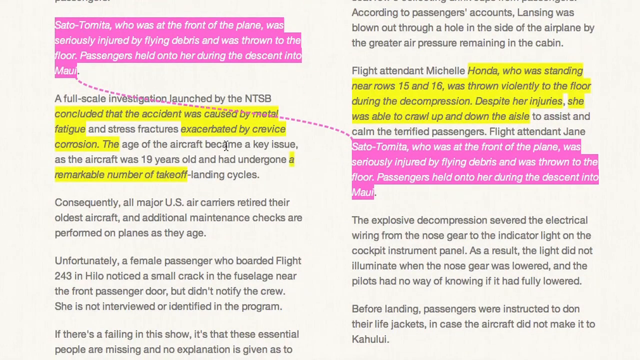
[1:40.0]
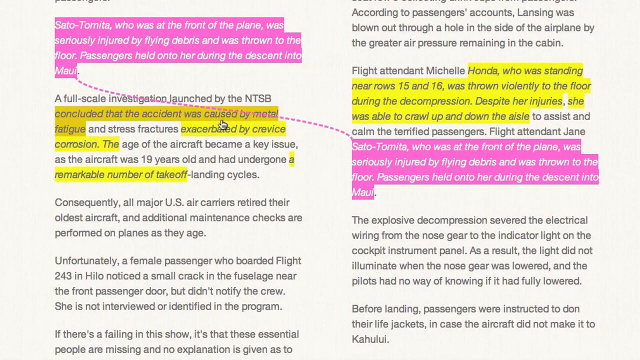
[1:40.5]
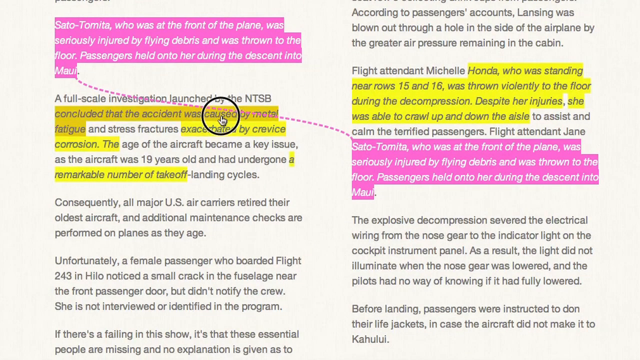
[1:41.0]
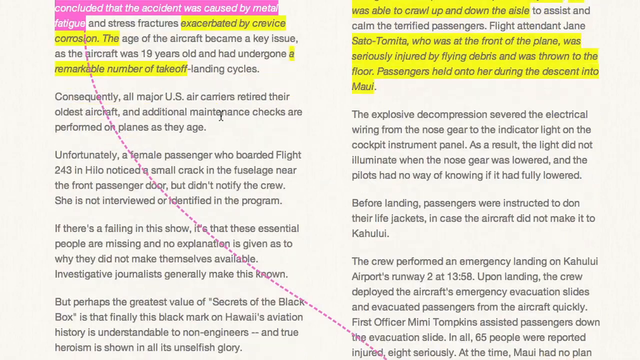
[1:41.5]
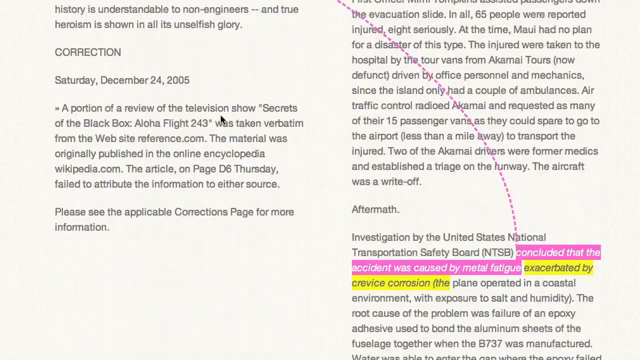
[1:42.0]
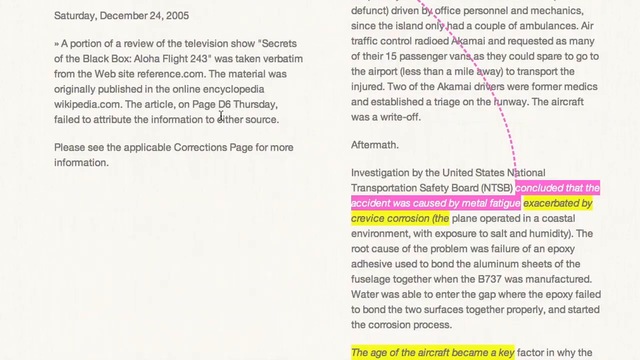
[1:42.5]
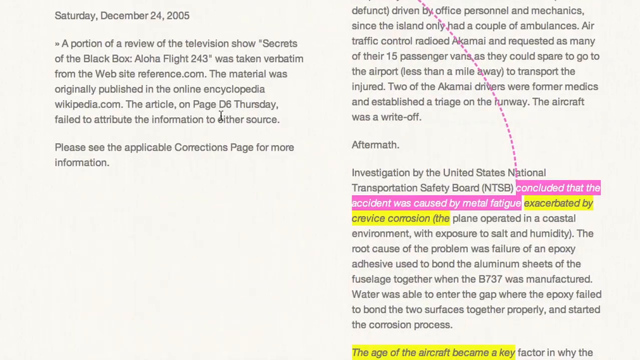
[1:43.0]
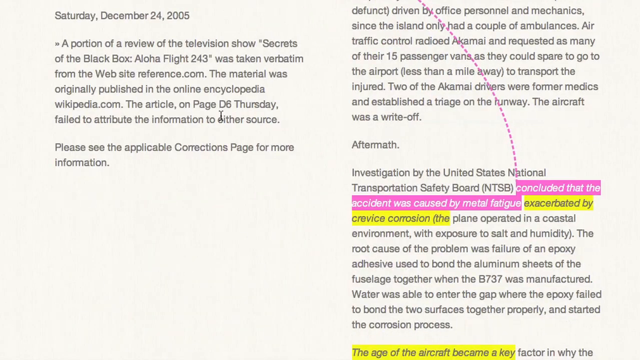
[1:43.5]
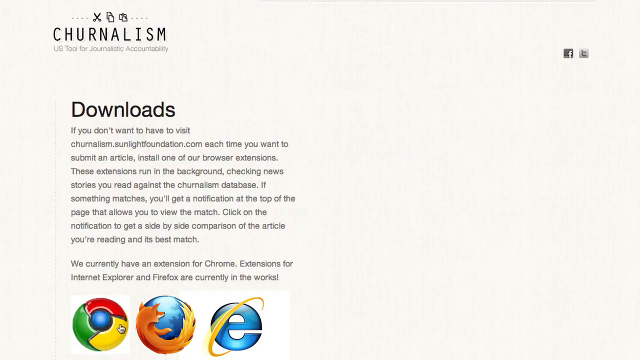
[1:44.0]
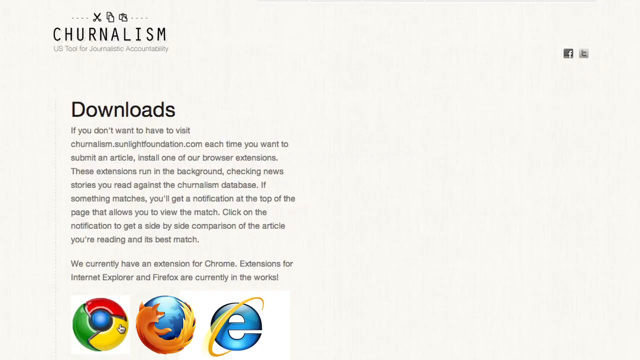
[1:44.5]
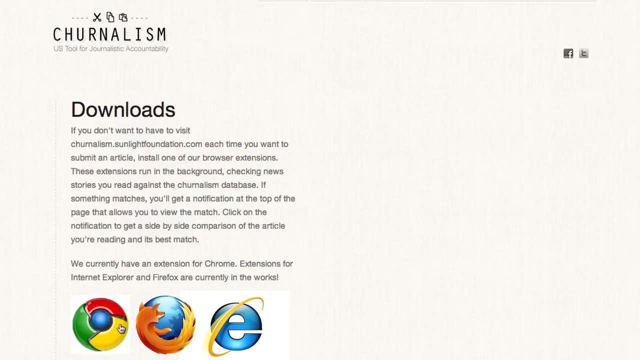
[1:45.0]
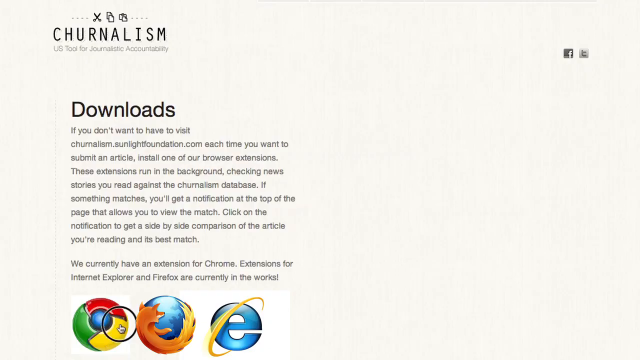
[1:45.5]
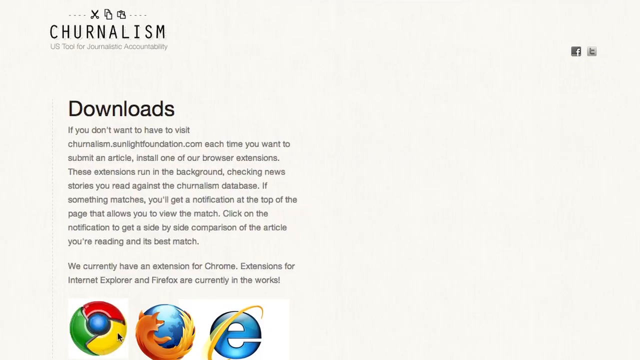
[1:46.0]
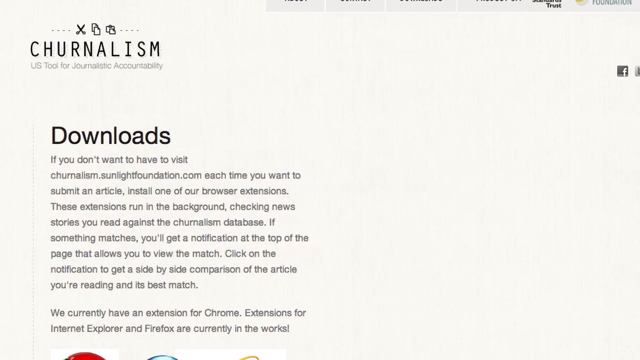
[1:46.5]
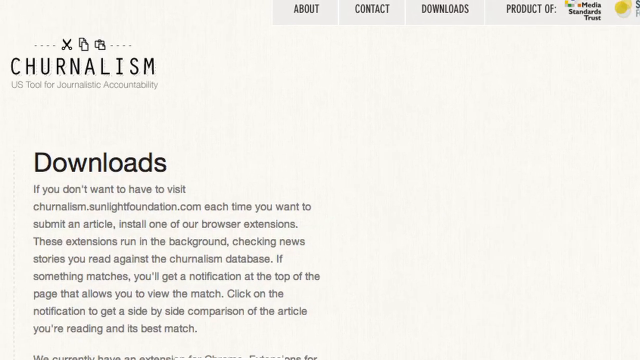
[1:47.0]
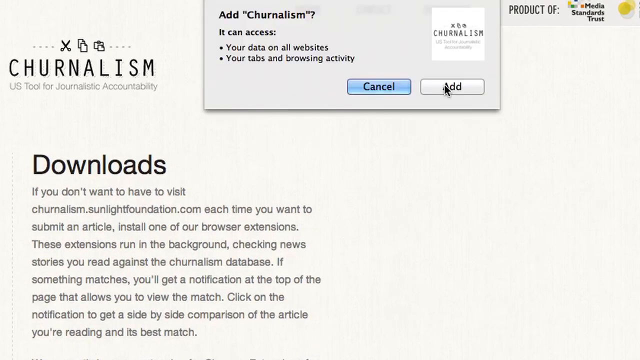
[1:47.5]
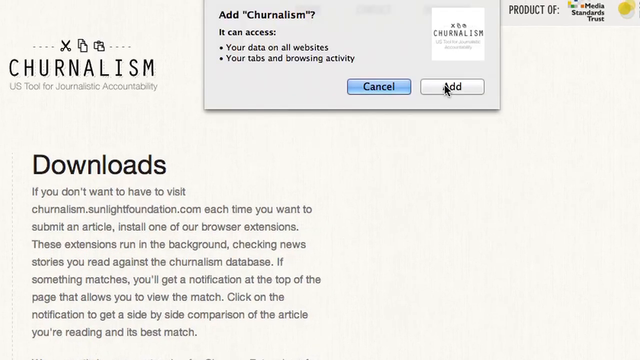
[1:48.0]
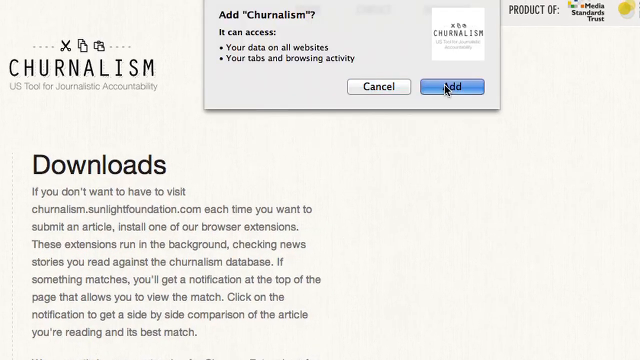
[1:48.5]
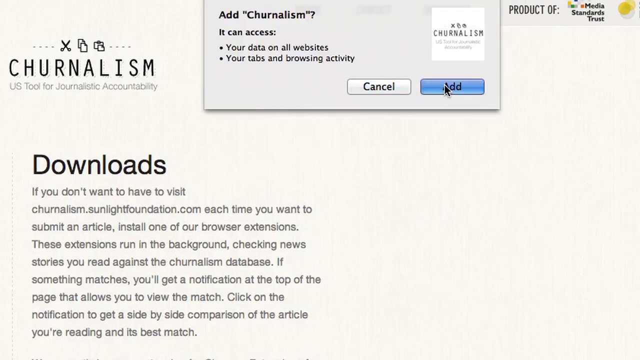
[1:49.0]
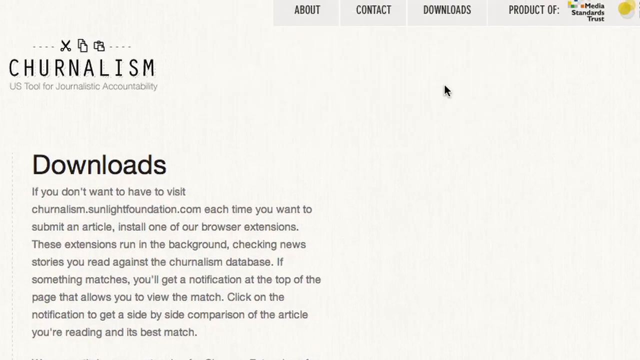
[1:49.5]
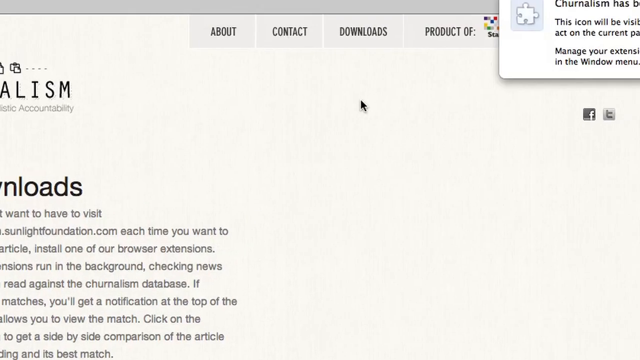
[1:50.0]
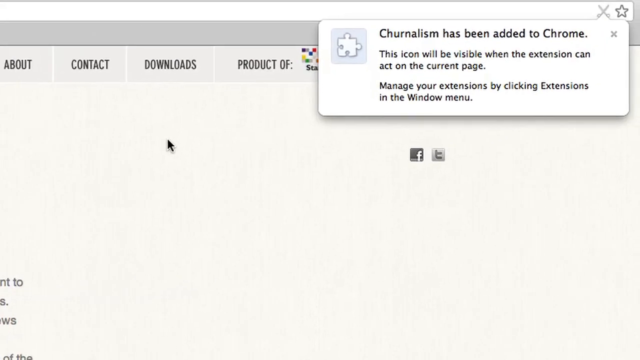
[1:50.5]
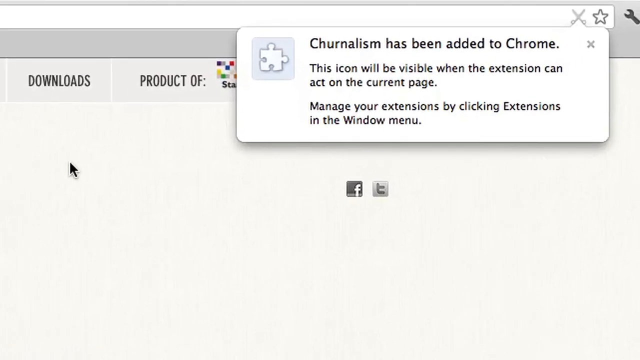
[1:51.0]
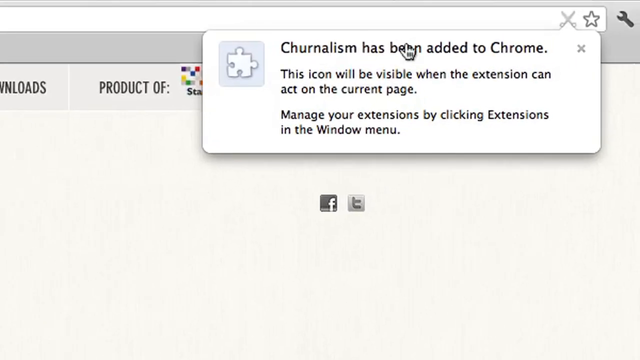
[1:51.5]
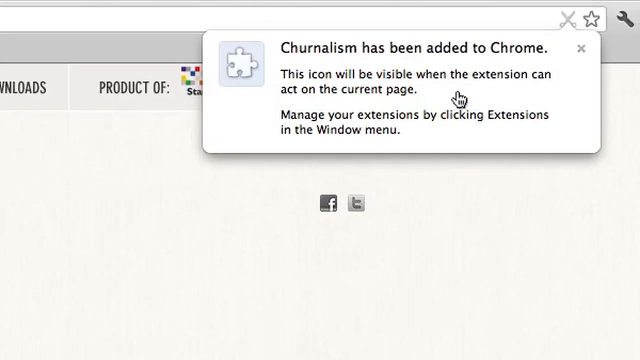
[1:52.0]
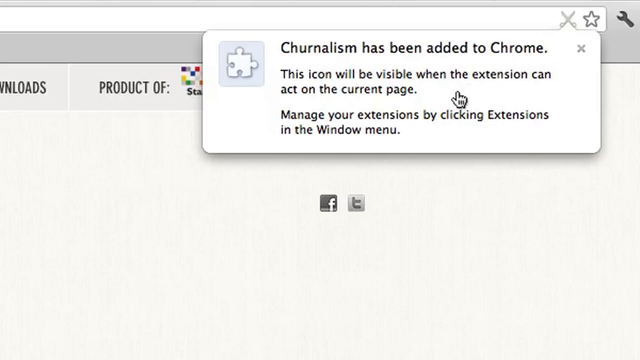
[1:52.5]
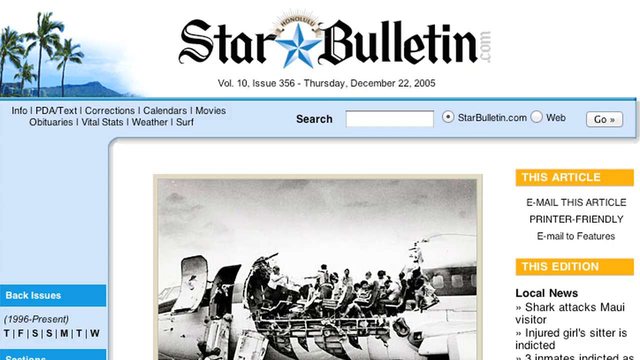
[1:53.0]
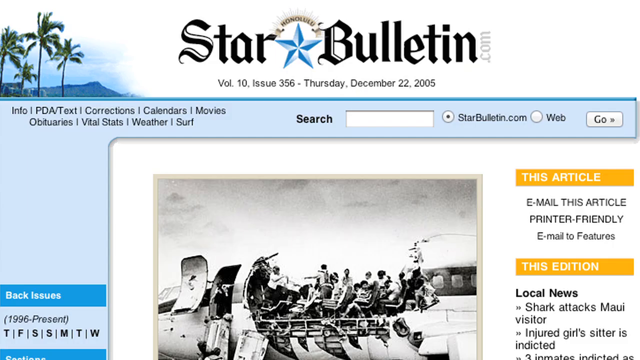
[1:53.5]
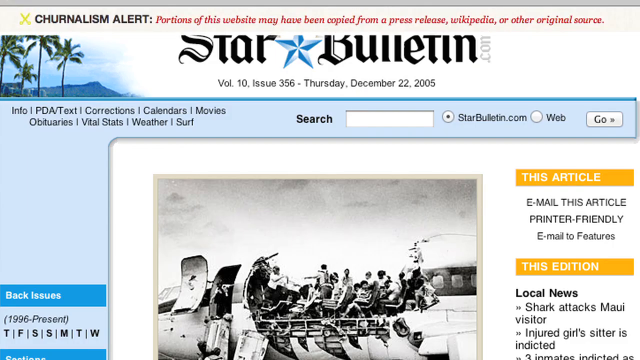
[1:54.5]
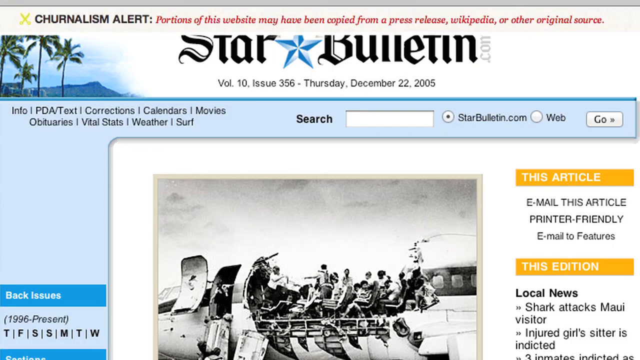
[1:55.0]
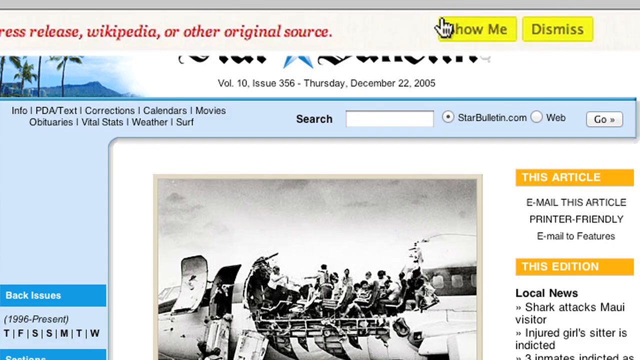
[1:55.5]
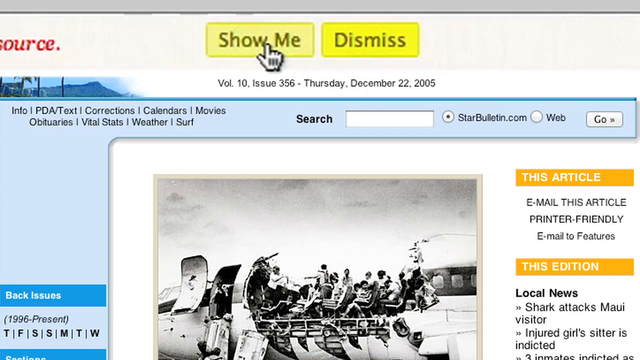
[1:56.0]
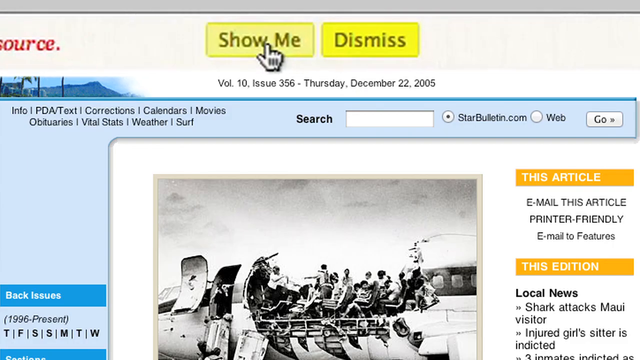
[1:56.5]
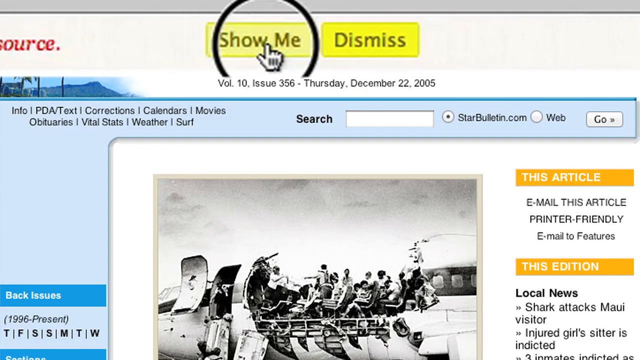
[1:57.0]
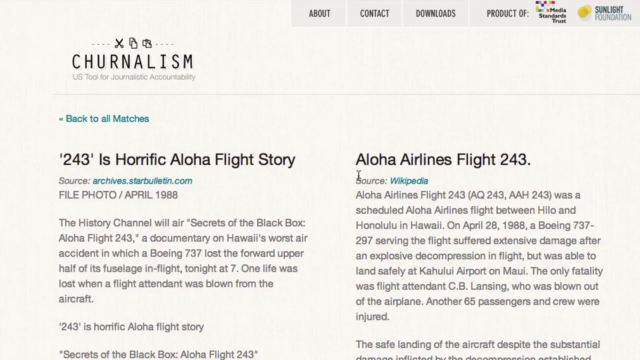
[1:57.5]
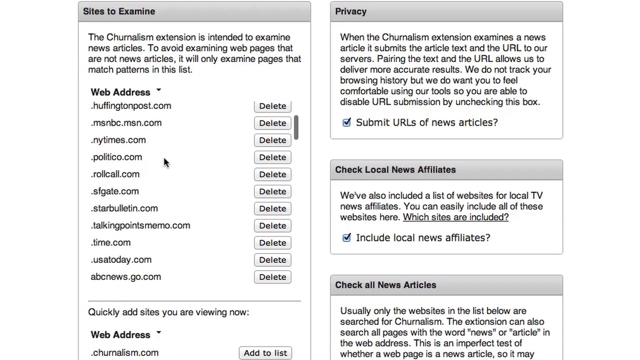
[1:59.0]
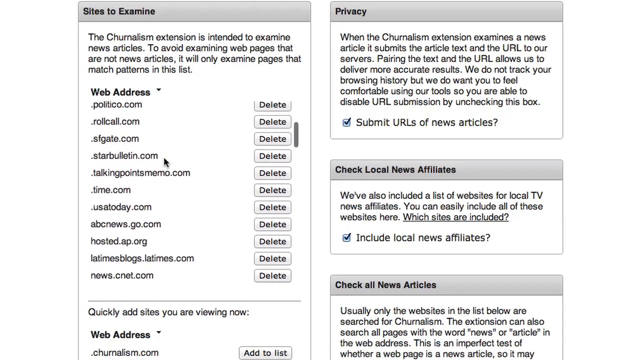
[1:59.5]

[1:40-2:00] Paragraphs of a document are shown highlighted, with the information separated into two columns and yellow and pink highlighting in various areas. The user clicks on one area and connects it to another part of the document while scrolling downward a bit, like hyperlinking the information. The view pans back to the Journalism webpage, which says "Downloads" and underneath, "If you don't want to have to visit churnalism.sunlightfoundation.com each time you want to submit an article, install one of our browser extensions. These extensions run in the background checking news stories you read against the Journalism database." The page scrolls up a bit and the camera focuses on adding Journalism as an extension to Chrome. It then pans over to the homepage of another website showing related information, where a highlighted "Show Me" button is clicked and leads to another page.